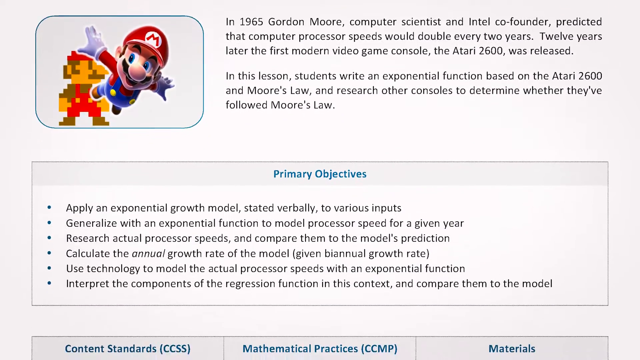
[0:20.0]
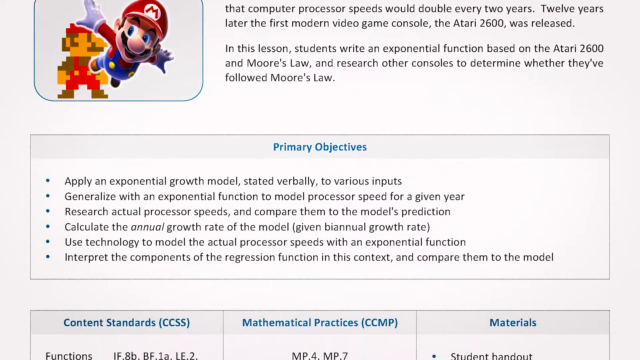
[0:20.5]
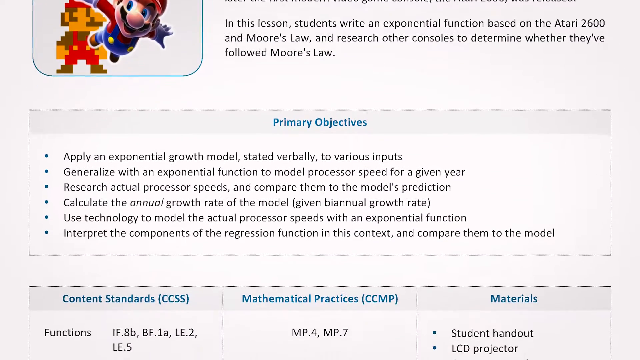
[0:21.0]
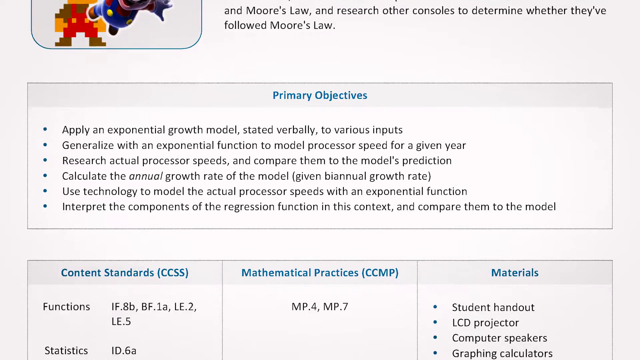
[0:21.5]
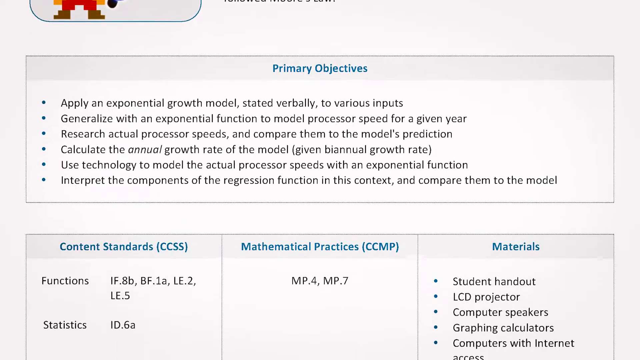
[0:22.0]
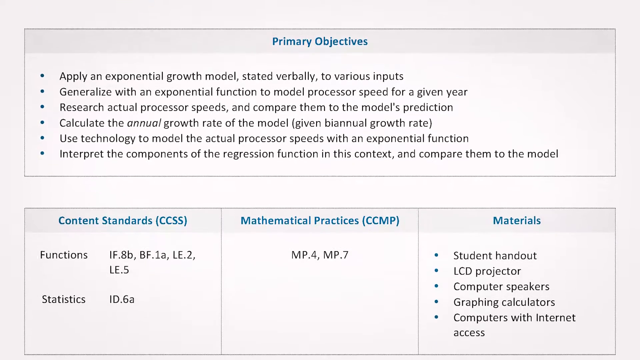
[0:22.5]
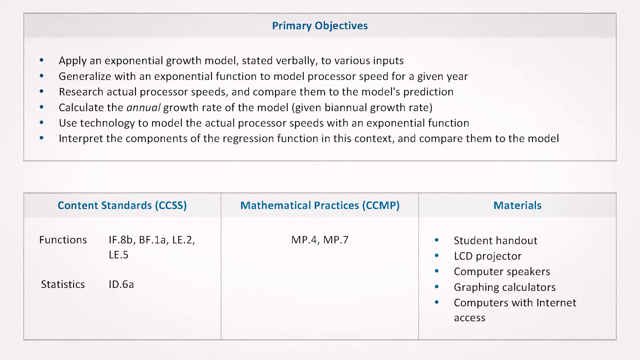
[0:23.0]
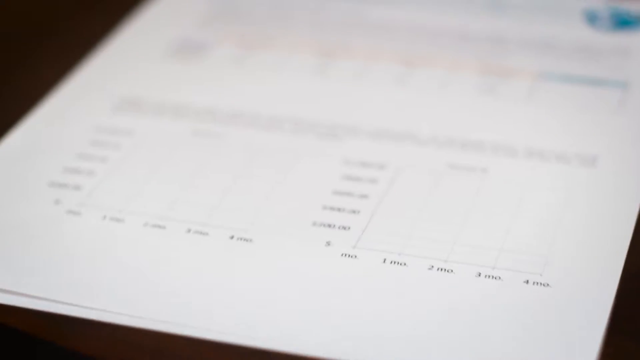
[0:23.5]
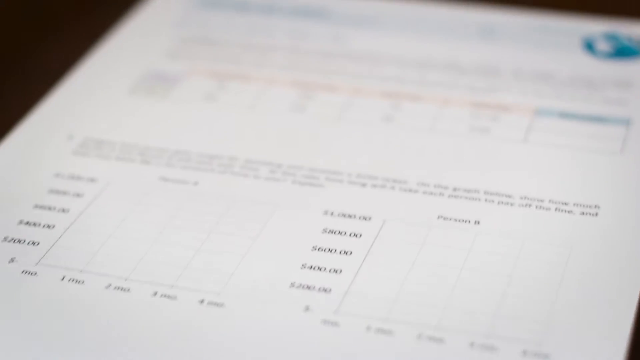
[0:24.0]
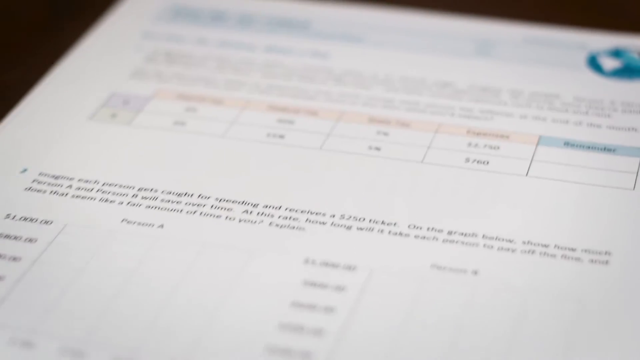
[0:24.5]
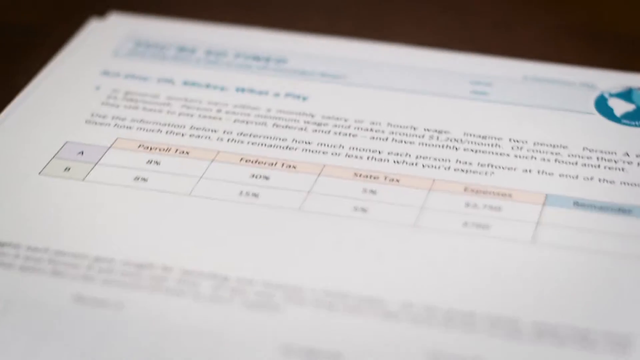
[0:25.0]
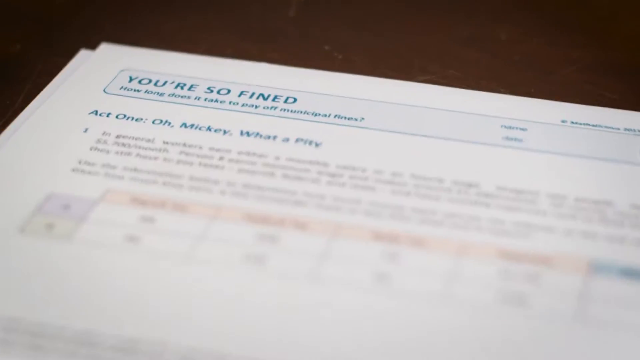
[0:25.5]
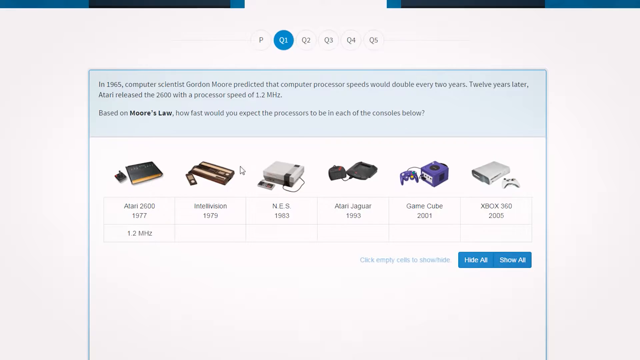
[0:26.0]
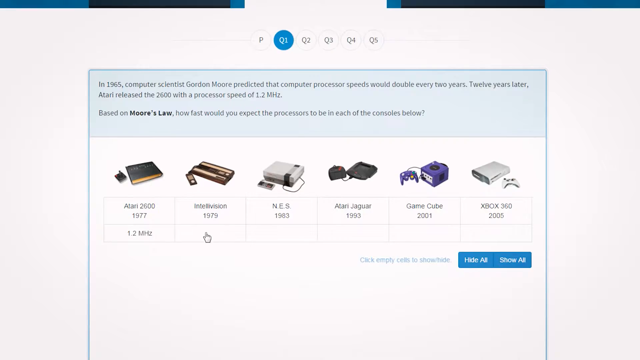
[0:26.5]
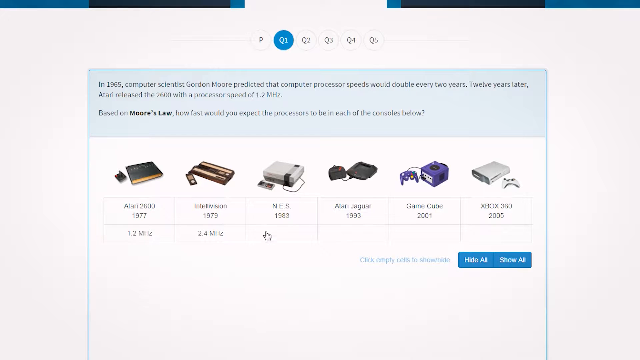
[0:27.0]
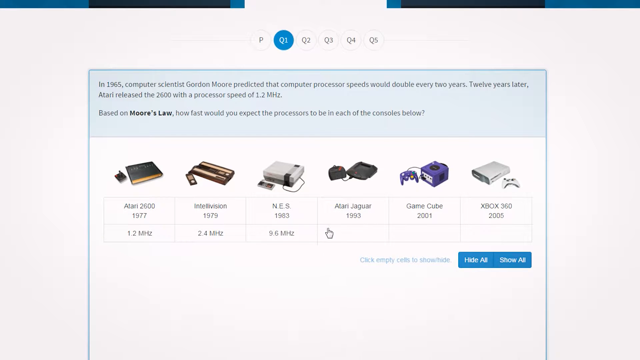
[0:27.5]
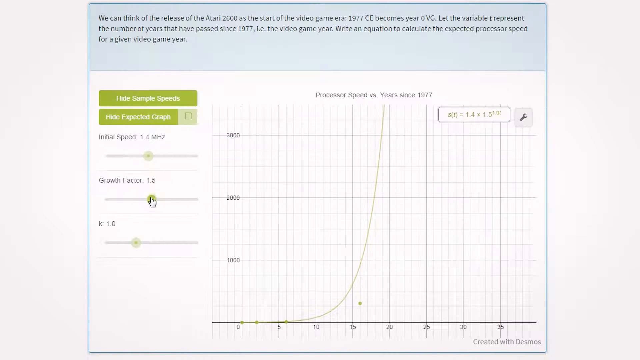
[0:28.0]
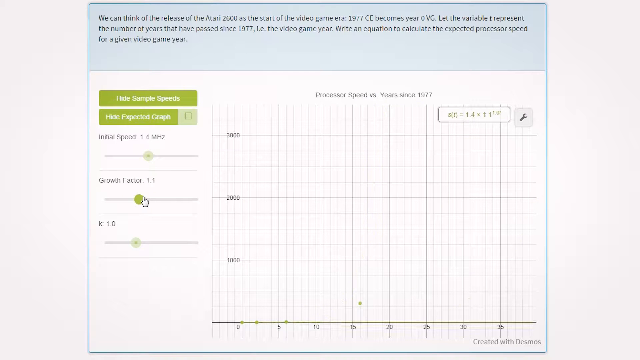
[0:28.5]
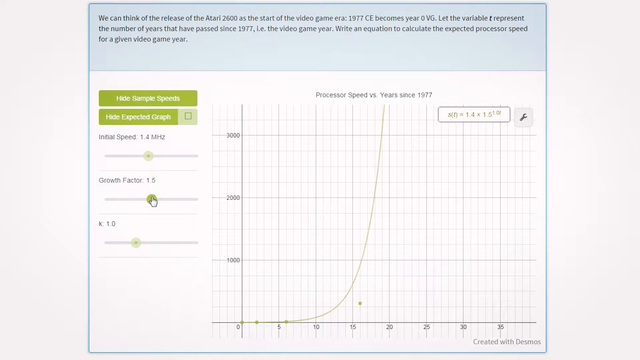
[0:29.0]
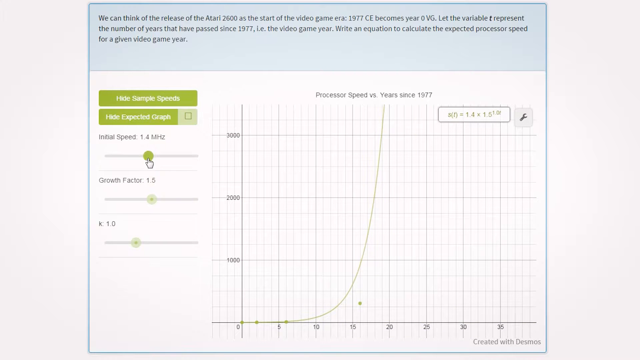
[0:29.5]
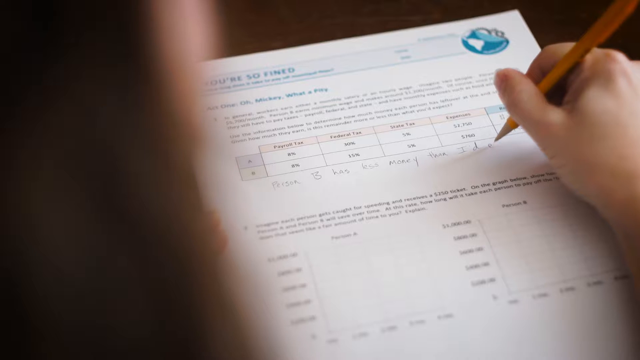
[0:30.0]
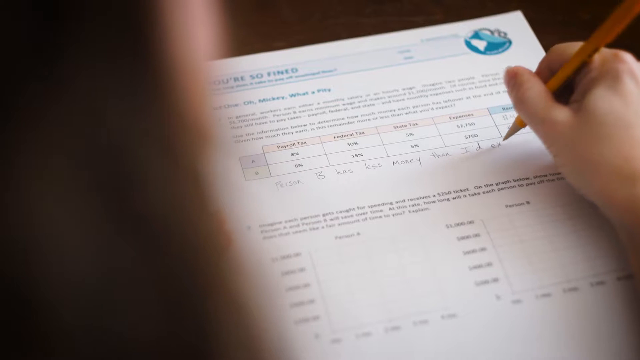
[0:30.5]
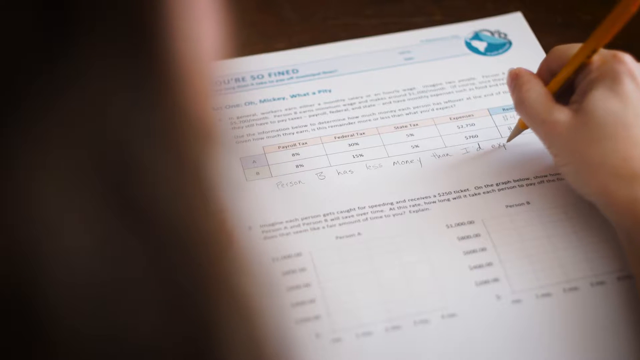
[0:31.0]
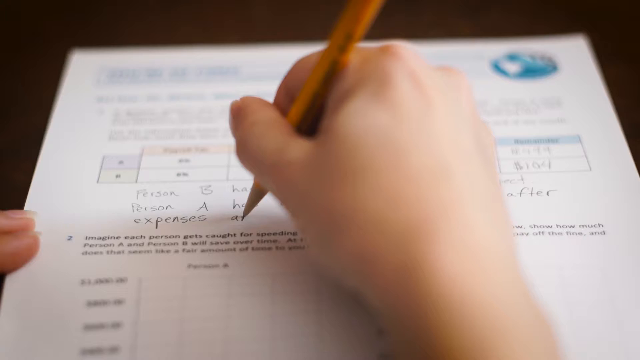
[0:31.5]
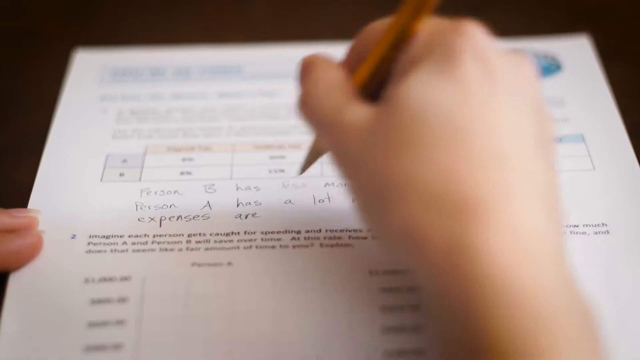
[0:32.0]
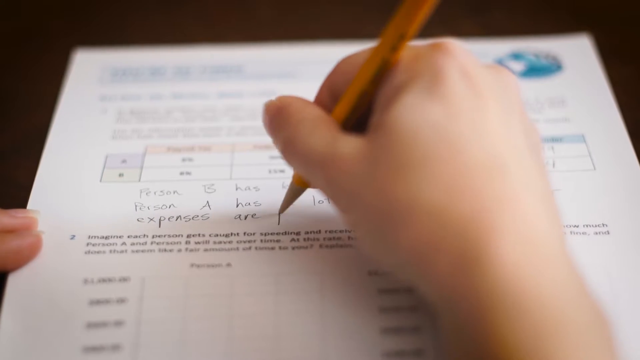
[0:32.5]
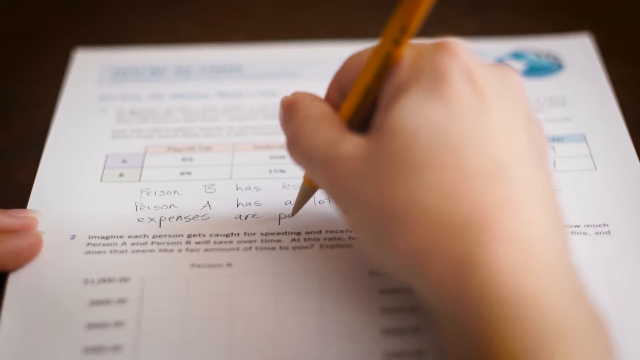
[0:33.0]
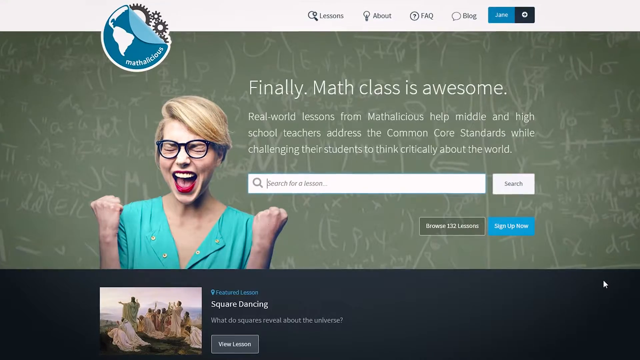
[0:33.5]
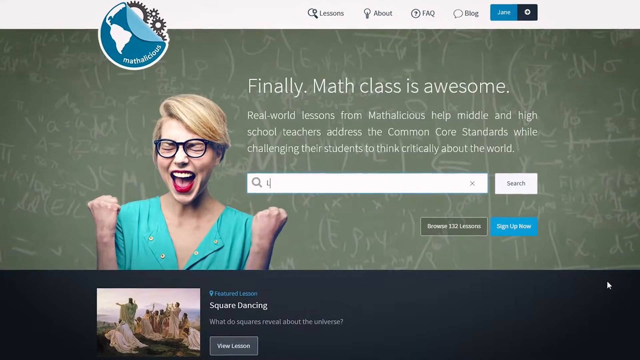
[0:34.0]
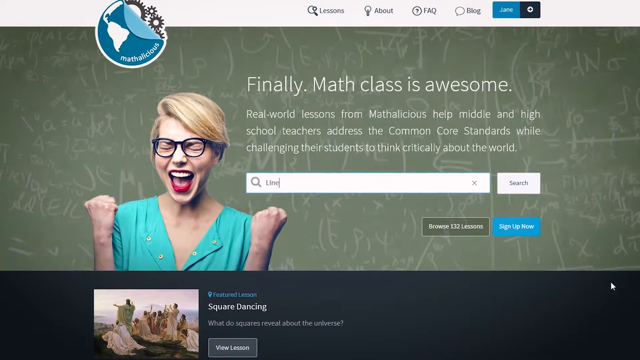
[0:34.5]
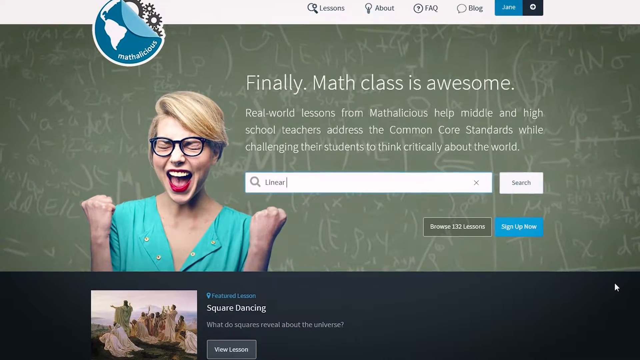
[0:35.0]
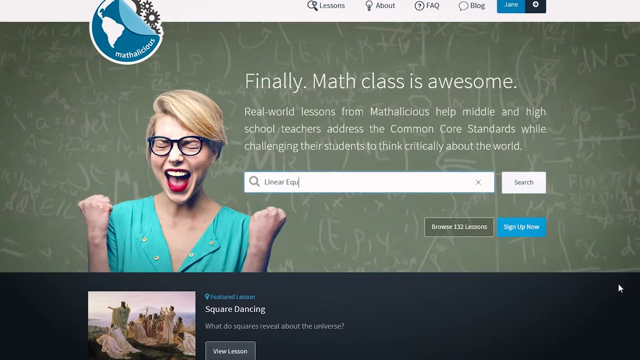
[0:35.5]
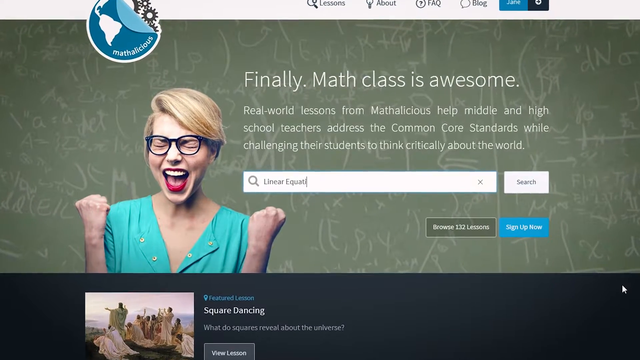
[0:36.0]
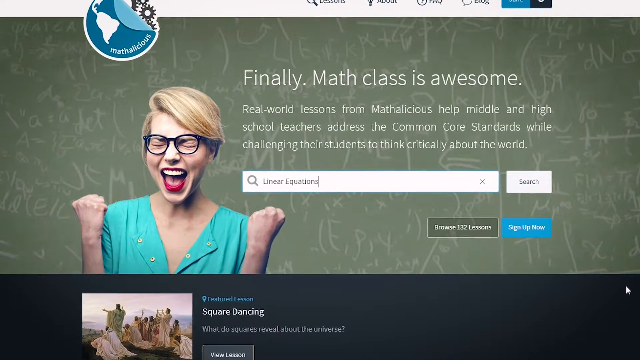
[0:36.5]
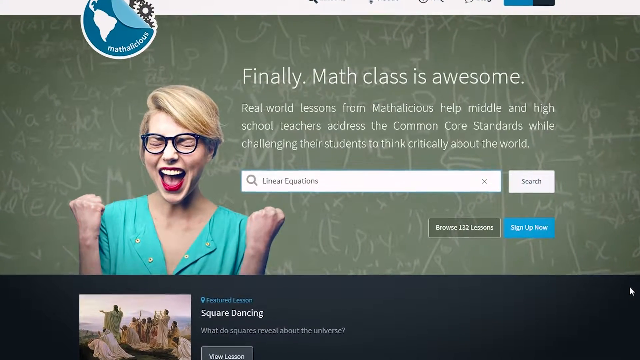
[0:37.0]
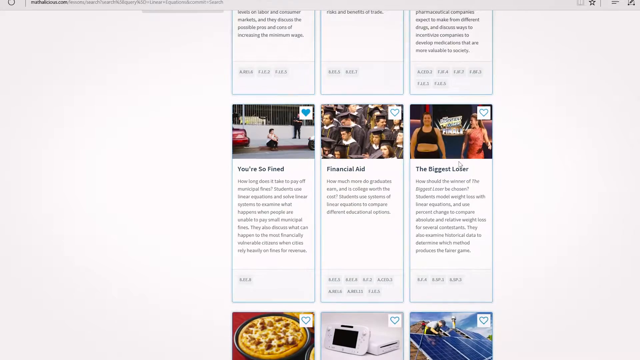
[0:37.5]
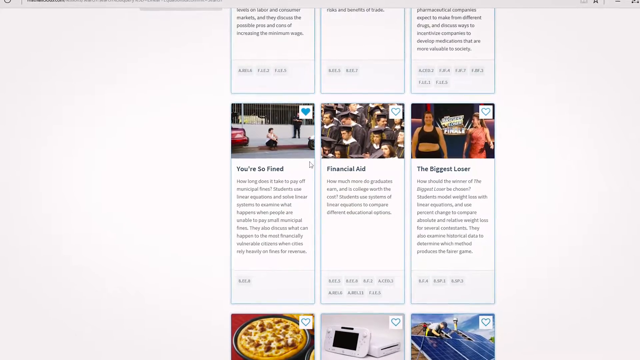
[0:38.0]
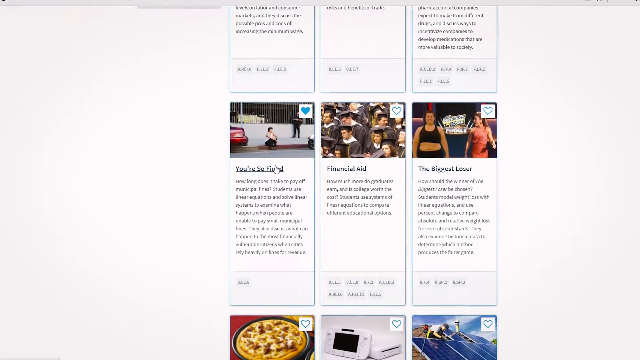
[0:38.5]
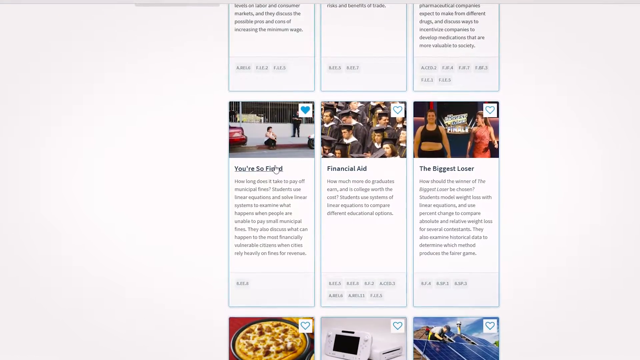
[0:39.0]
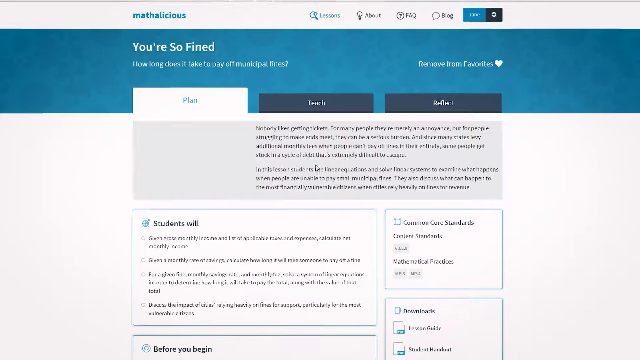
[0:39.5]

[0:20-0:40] The website shows the primary objectives that should be met. The scene then pans to a worksheet. It returns to the website, which shows video game consoles and asks how fast the processors are for each console. The view pans to a person writing the answers on the sheet of paper shown earlier, followed by a closer shot of the student writing on the sheet. Finally it pans back to the website. The website's details seem focused on complex mathematical and electronic content, and it seems to show how to apply these details to the answers. The text on the website is readable, and the words appear to be written correctly.